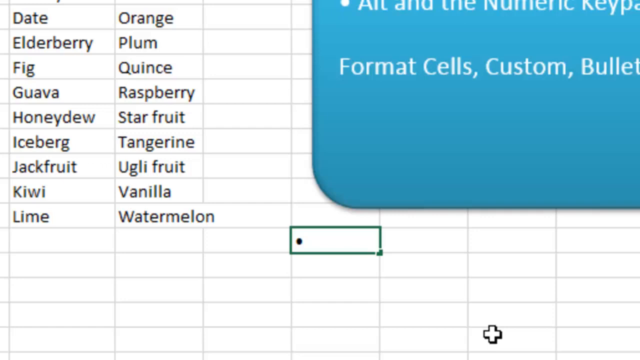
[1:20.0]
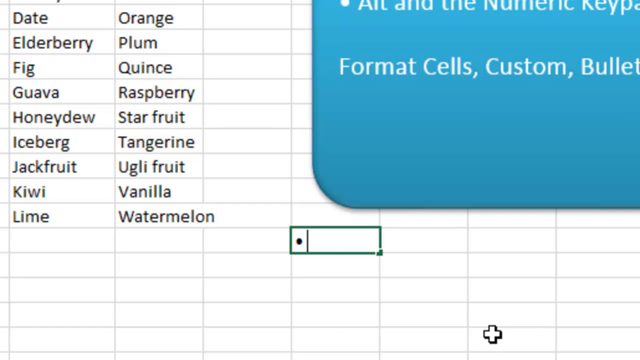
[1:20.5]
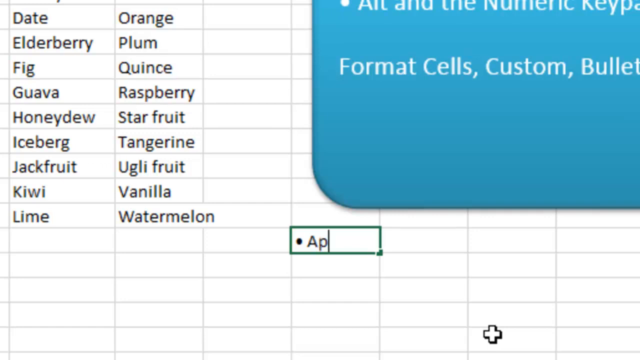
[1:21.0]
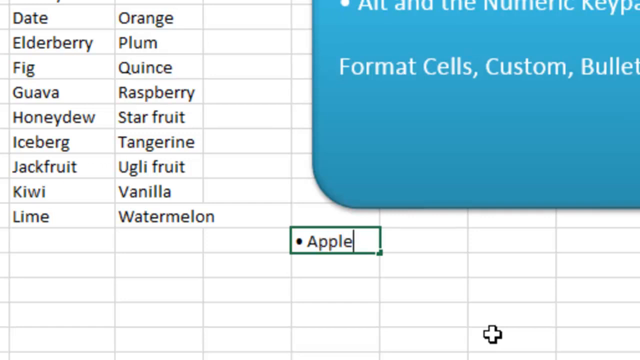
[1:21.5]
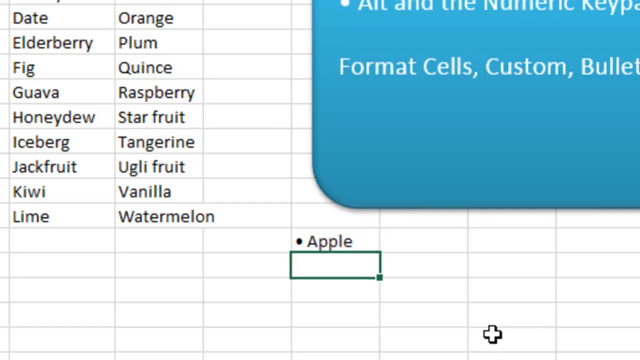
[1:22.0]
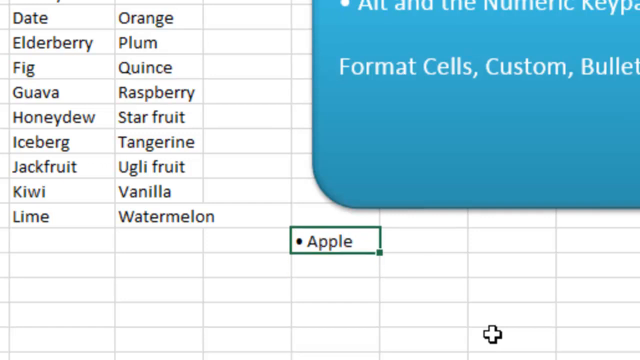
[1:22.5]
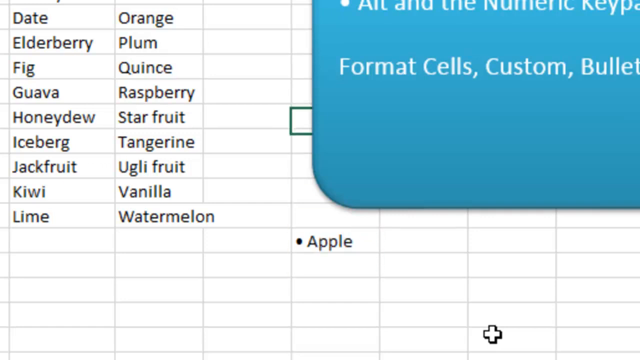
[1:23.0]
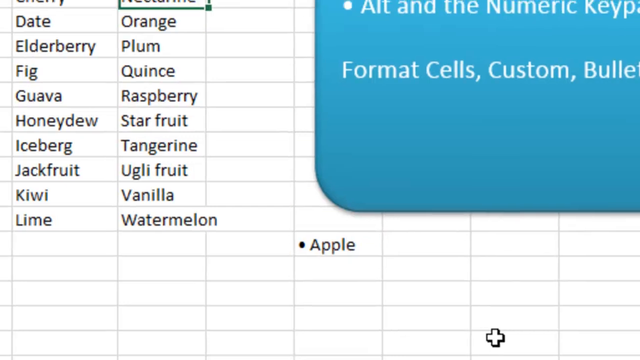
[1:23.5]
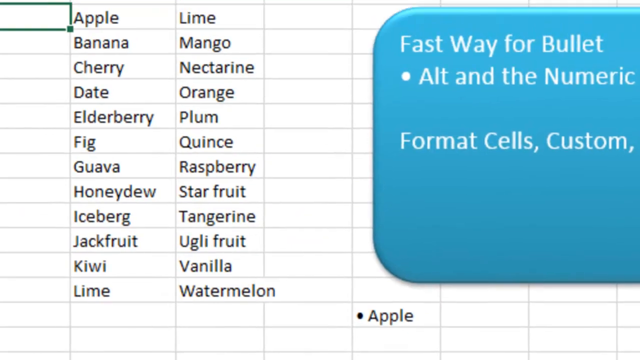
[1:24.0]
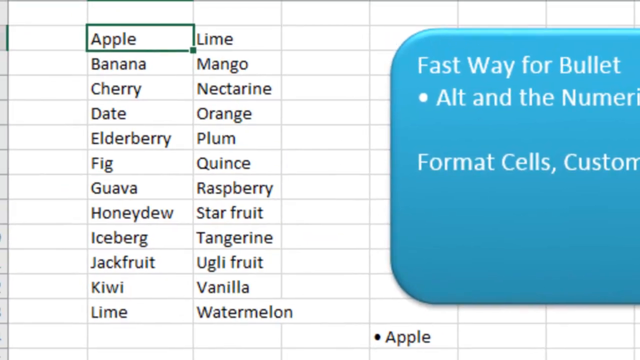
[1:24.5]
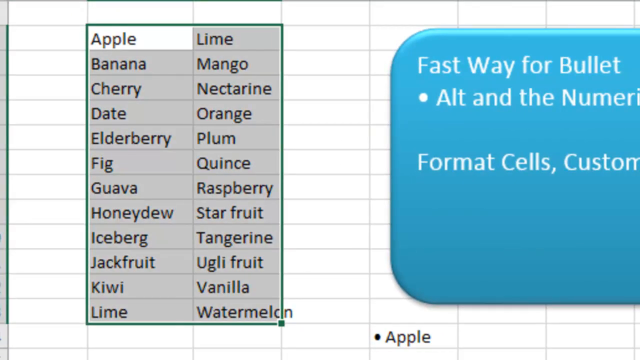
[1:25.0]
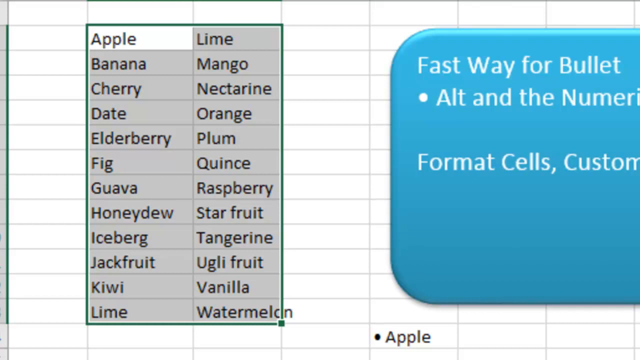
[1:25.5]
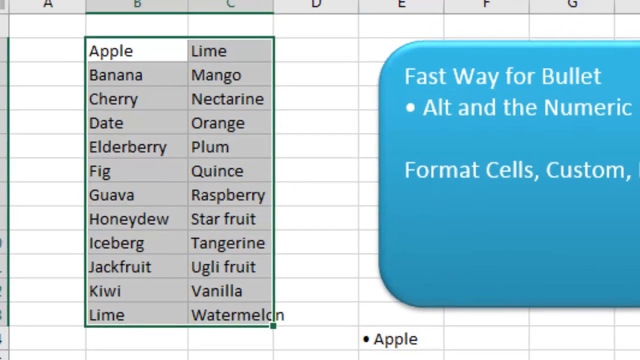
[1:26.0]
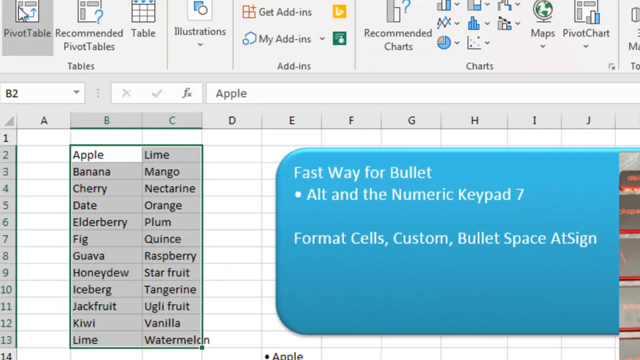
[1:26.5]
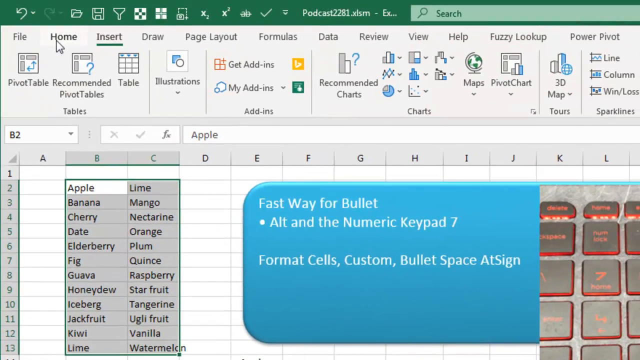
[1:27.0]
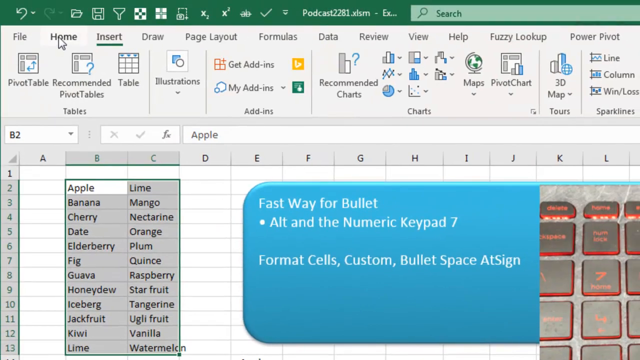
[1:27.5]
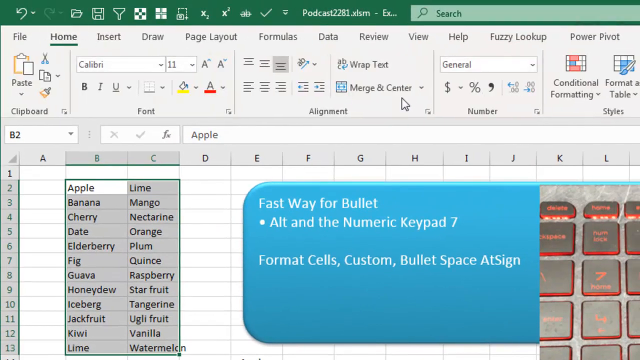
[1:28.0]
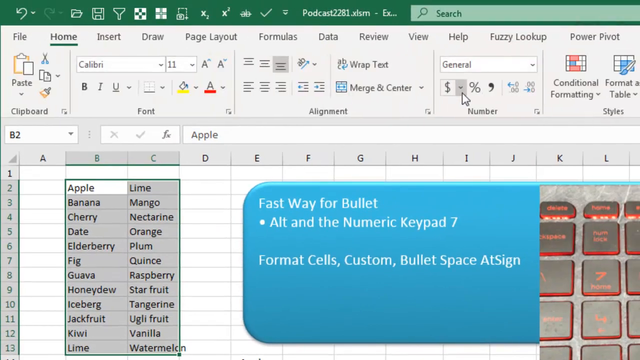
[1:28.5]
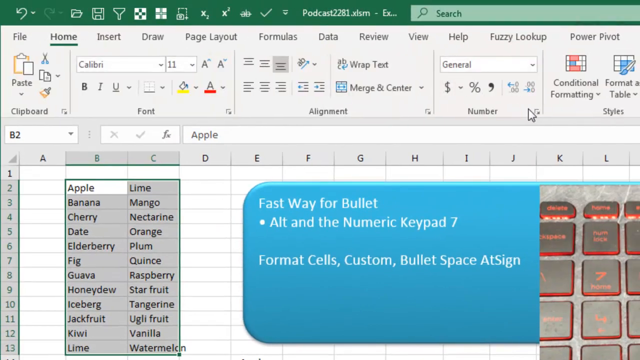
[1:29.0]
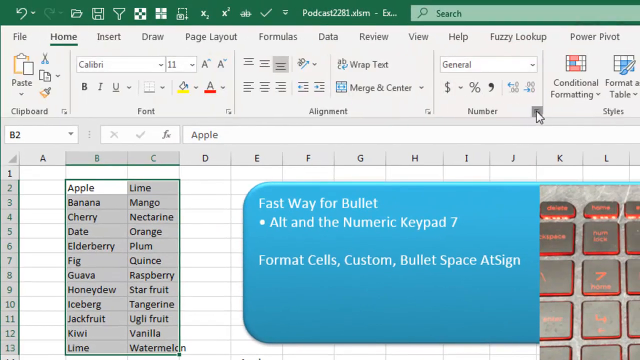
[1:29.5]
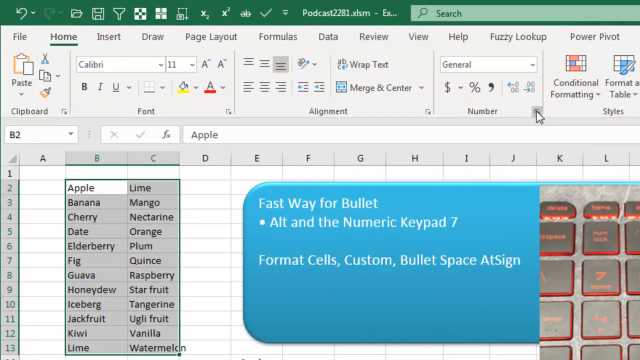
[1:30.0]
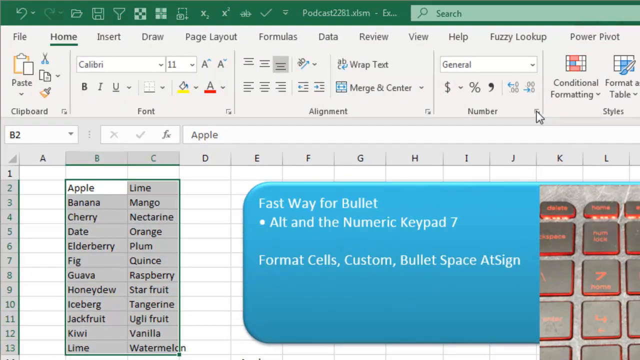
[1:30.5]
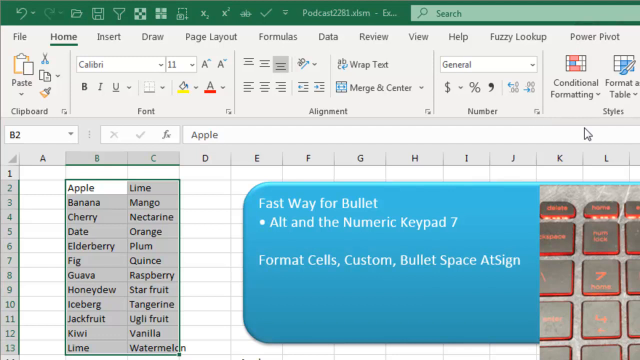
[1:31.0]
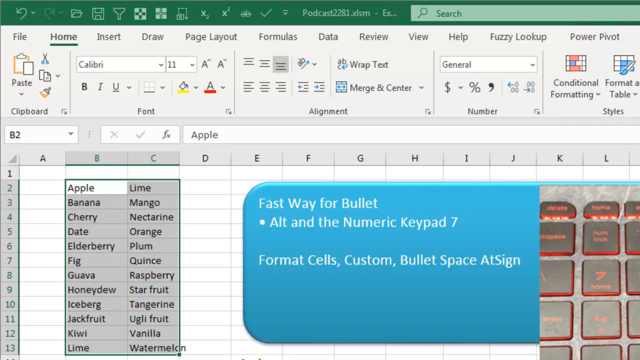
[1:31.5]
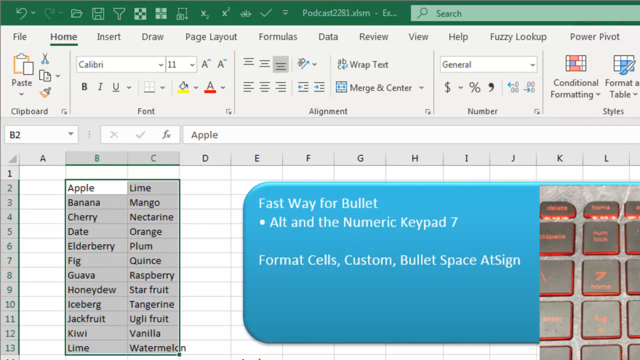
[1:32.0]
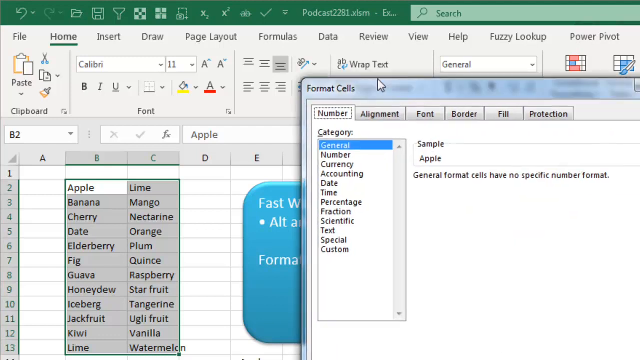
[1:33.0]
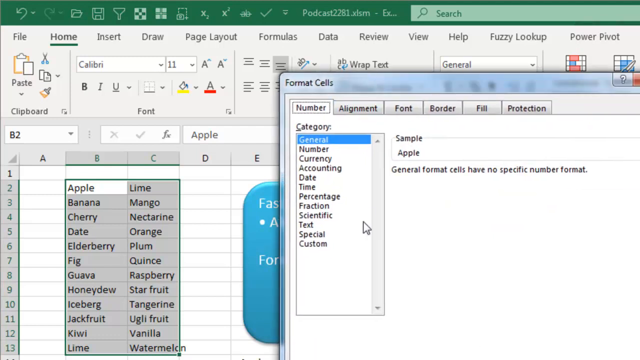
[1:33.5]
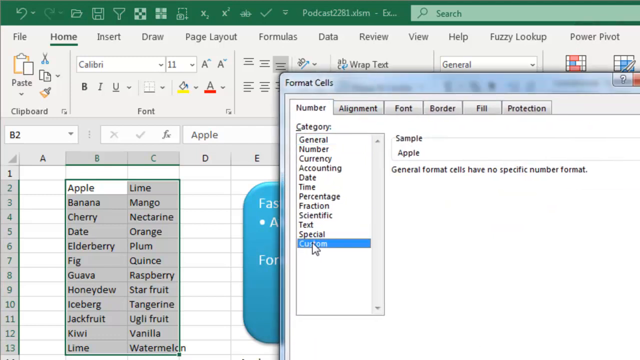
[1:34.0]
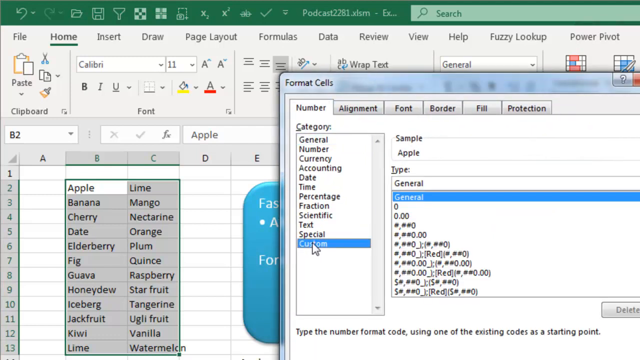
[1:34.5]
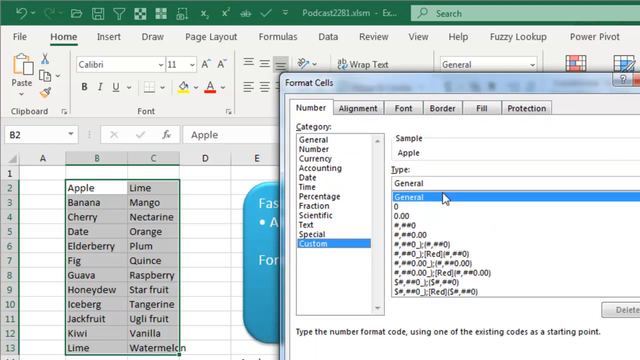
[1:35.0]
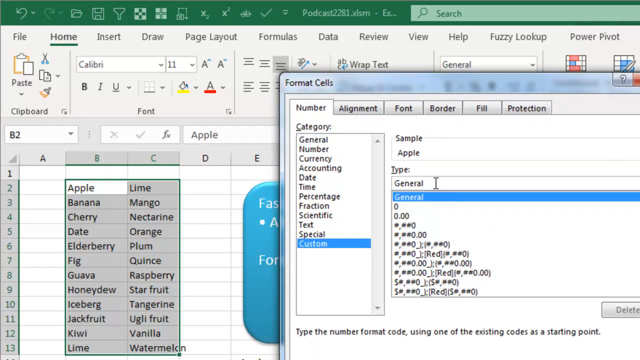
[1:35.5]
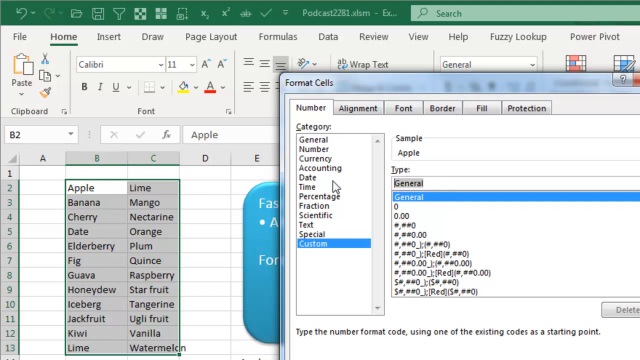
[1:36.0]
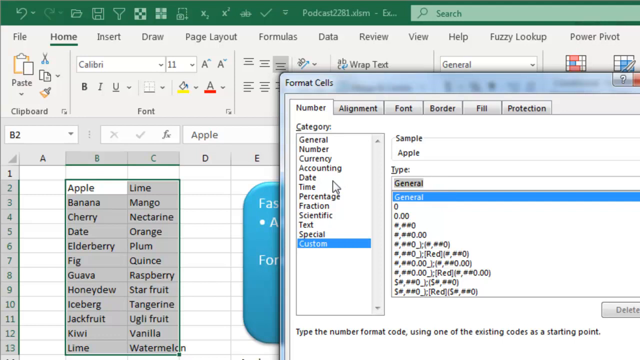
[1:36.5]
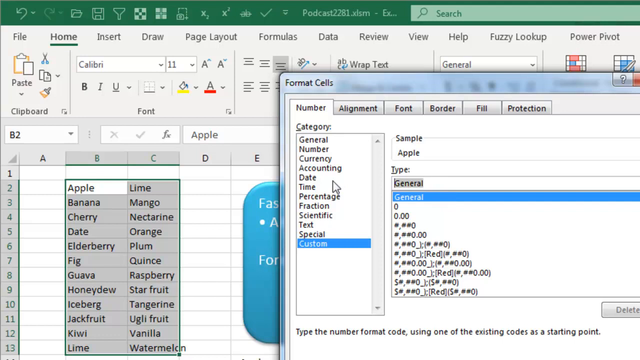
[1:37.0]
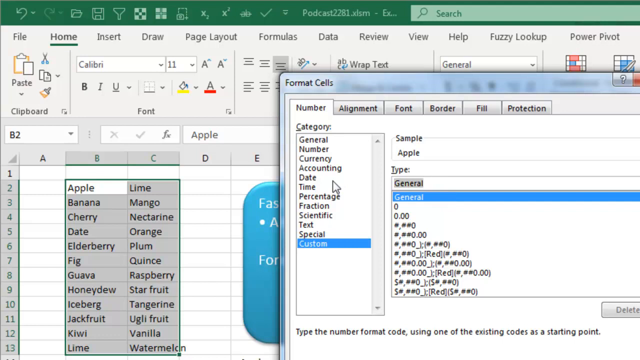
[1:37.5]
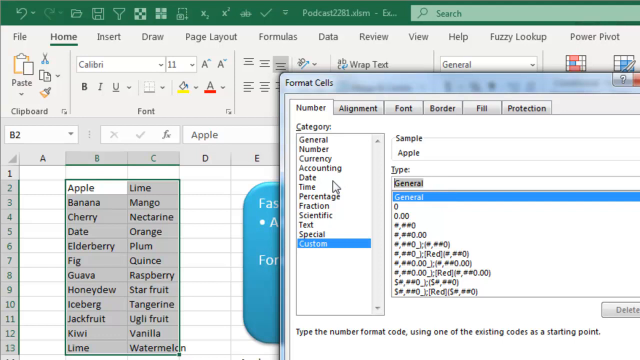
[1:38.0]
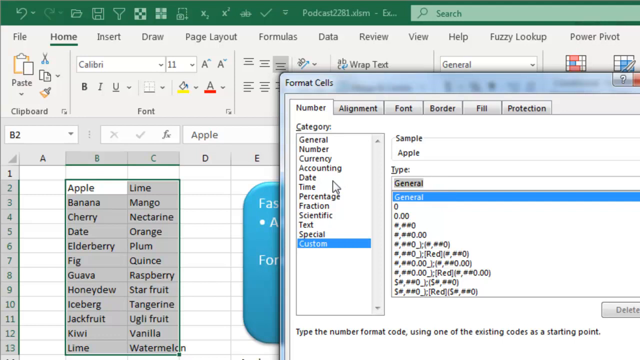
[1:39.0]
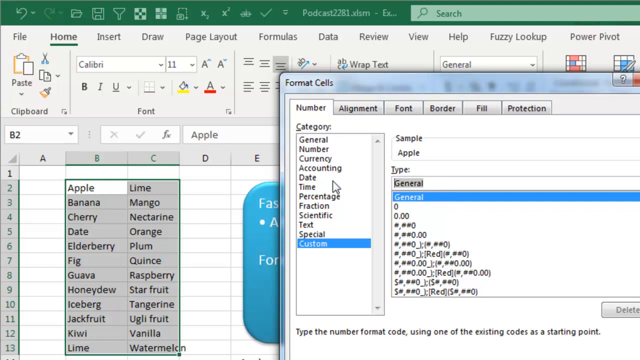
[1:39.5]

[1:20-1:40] A mouse moves on the screen of an Excel spreadsheet, highlighting some cells. The cursor moves to a list of two vertical columns of fruit words, such as apple, starfruit, orange and kiwi, and highlights both columns; the selection turns a kind of transparent gray with a dark outline around the box. The cursor then goes to the top of Excel, clicks Home, moves all the way to the right and clicks a small square button under the Number section, opening a Format Cells box. In the box, a dropdown under Category is used to select Custom.